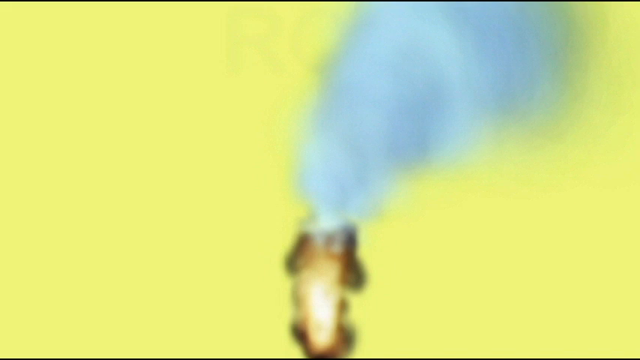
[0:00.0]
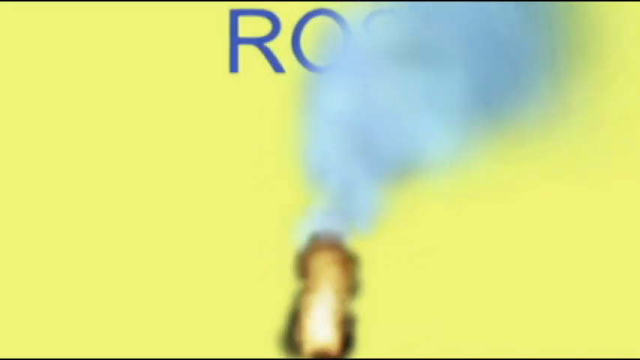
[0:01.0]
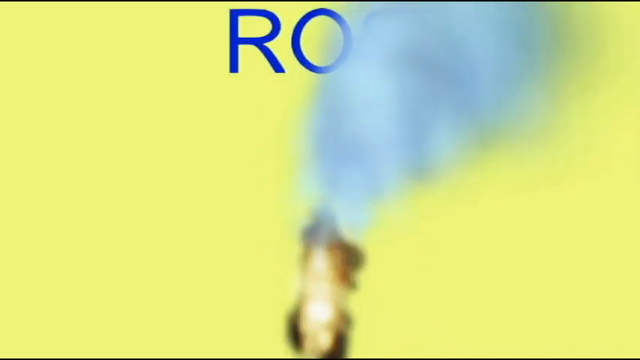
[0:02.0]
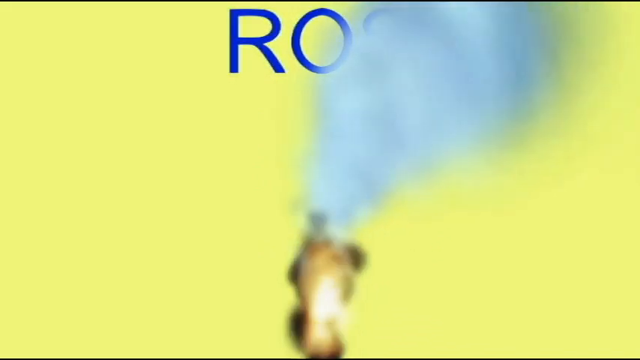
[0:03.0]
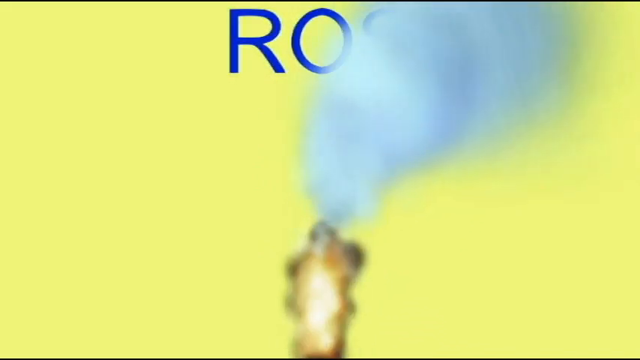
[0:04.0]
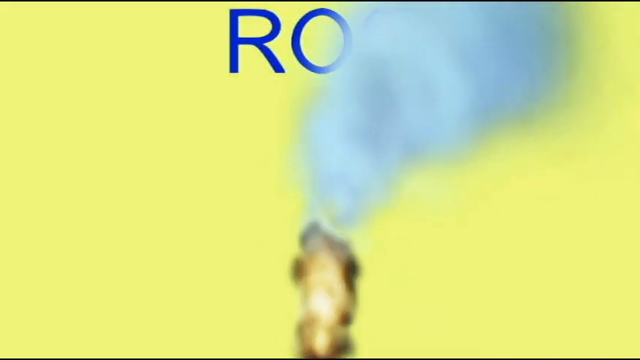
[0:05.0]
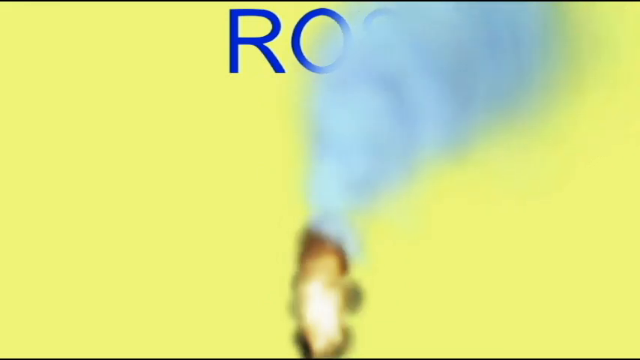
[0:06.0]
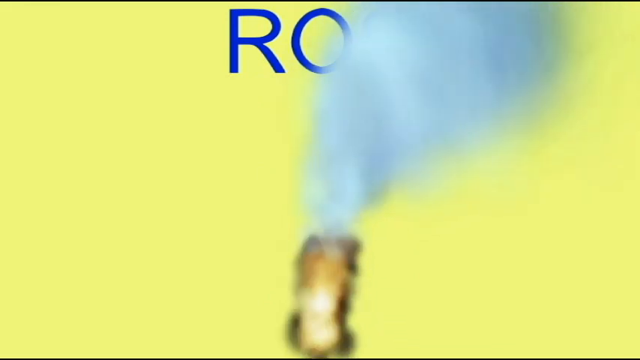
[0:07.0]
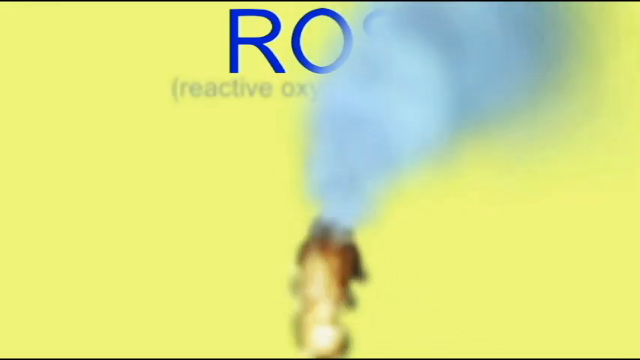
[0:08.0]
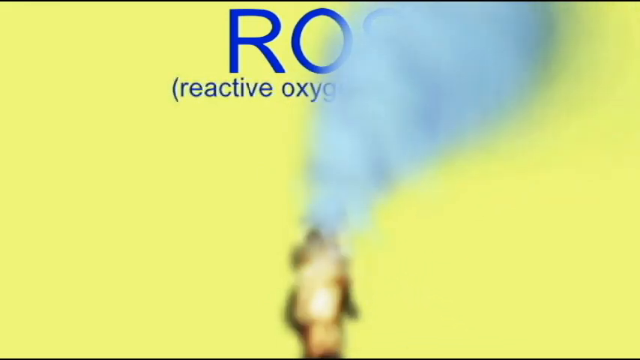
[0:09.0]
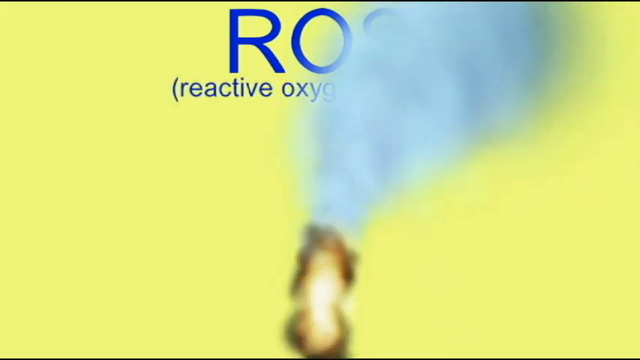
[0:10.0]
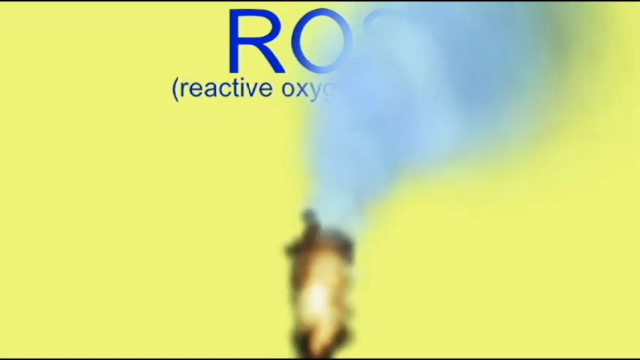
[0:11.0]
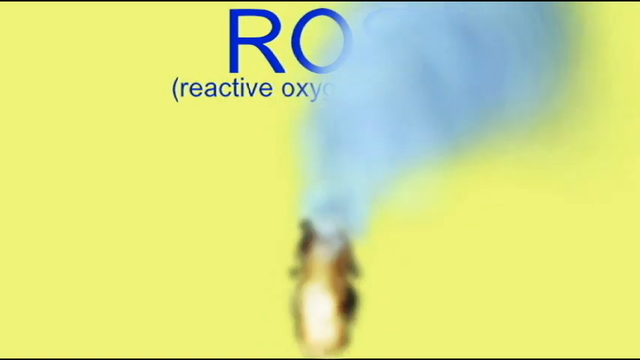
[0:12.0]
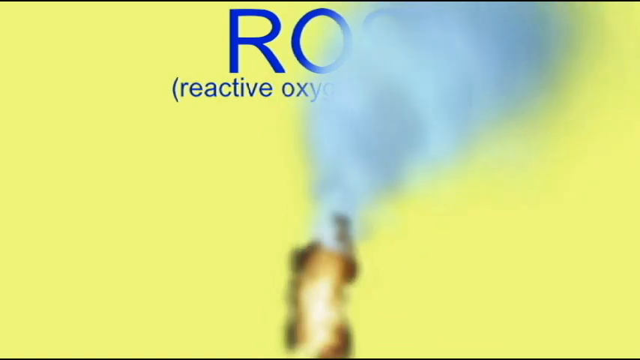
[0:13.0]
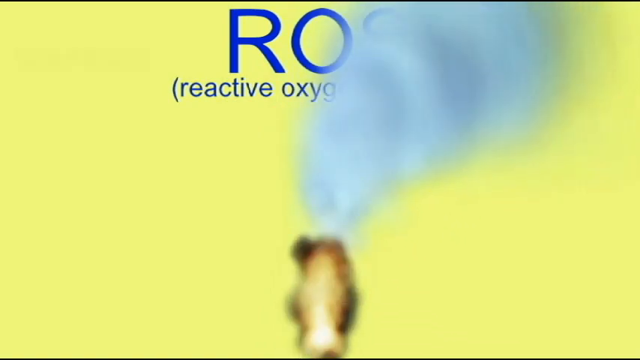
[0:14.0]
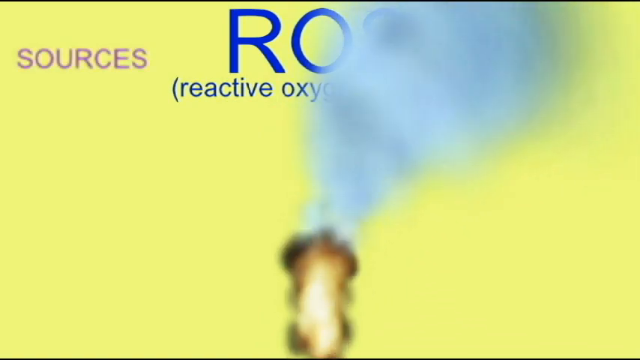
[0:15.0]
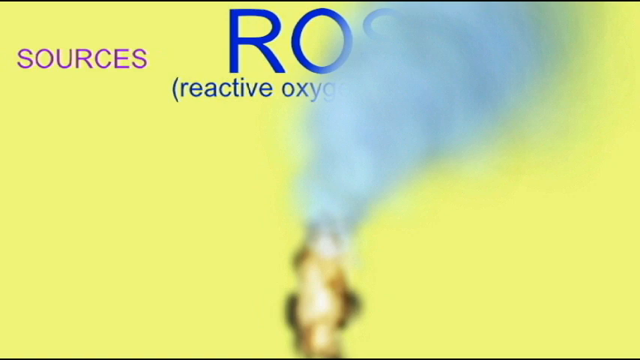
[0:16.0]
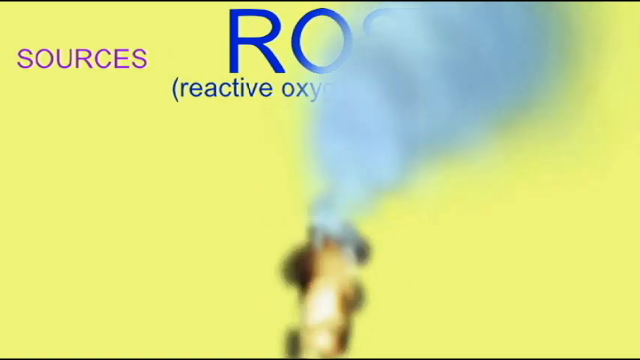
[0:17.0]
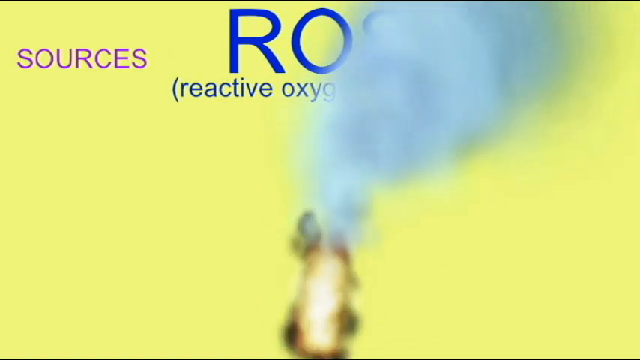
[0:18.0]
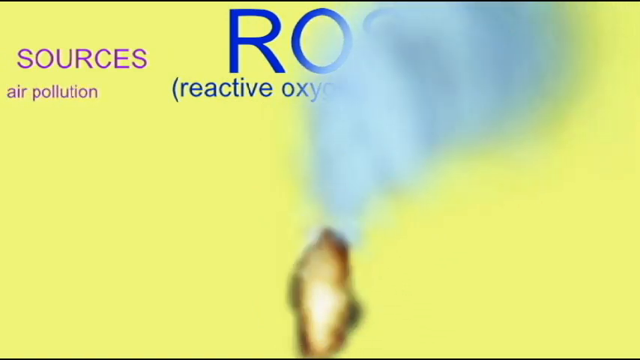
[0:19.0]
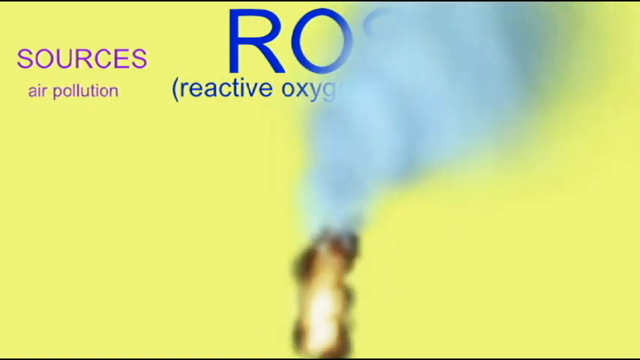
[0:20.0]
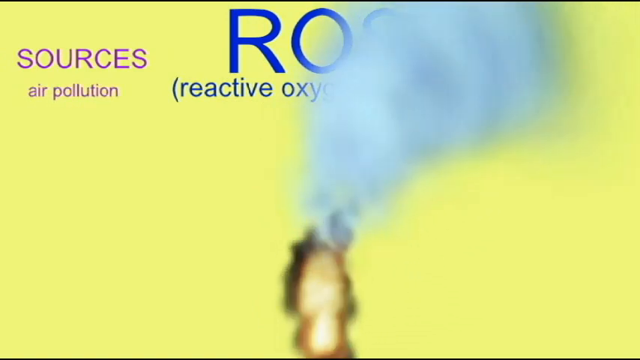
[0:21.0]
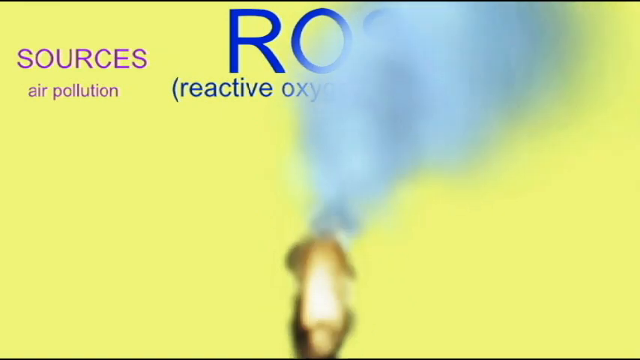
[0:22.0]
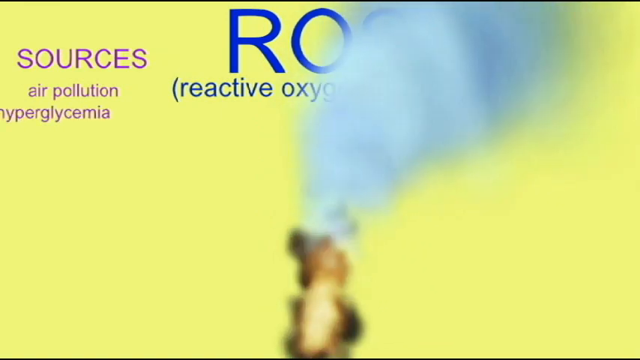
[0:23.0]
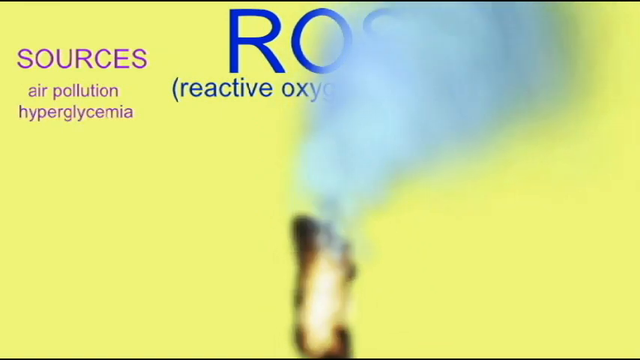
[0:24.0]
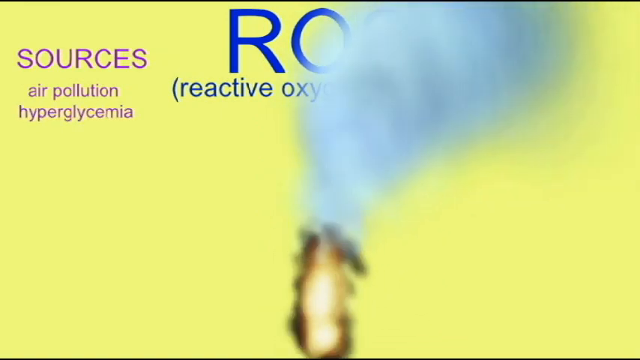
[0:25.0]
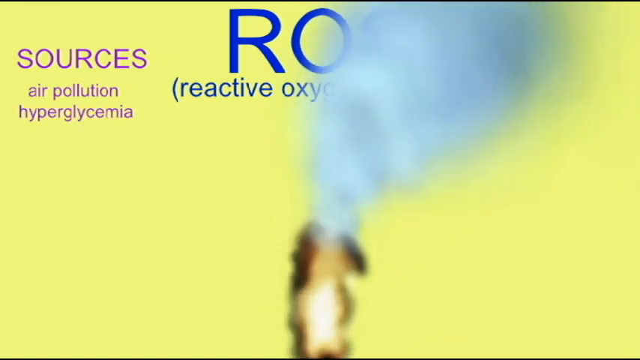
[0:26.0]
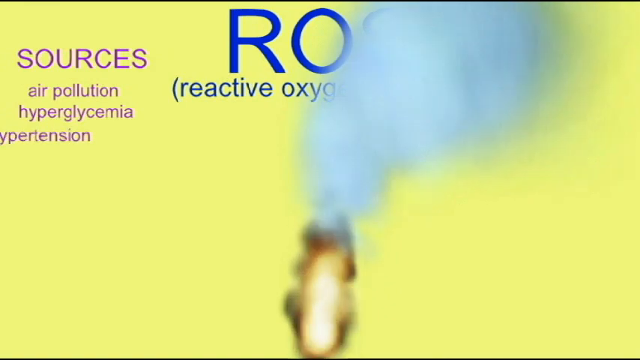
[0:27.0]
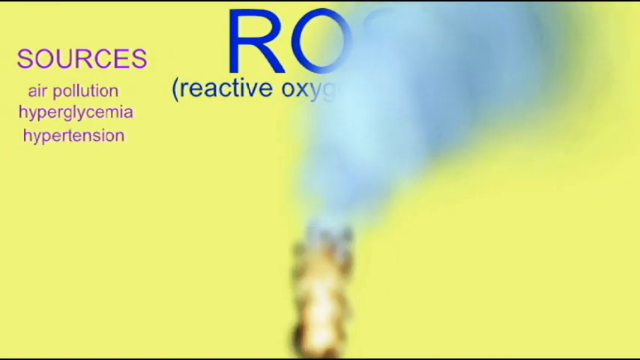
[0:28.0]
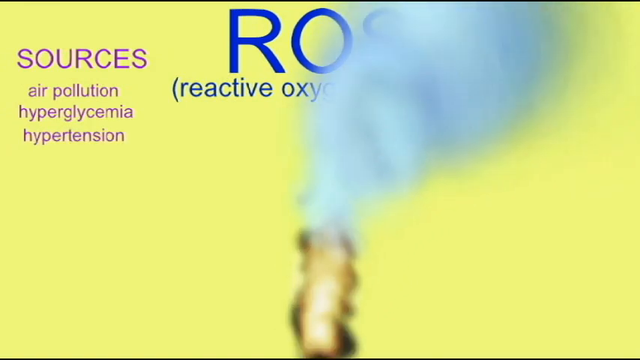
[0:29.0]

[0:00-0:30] The animation begins with a yellow screen, and blue text appears in the middle of its top, behind a plume of smoke; the letters "R-O" can be made out. At the bottom of the screen a fire is burning, a single flame with a brown top and an amber bottom, and gray smoke billows upward from it. More text continues to appear: in parentheses, "reactive oxygen," and in purple the word "sources," followed by "air pollution," "hyperglycemia," "hypertension." Then the text disappears, leaving the yellow background with a single amber flame burning at the bottom in the middle and a plume of gray smoke billowing upward and slightly to the right, growing wider as it reaches the top, so it is wider at the top than at the bottom where it leaves the flame.